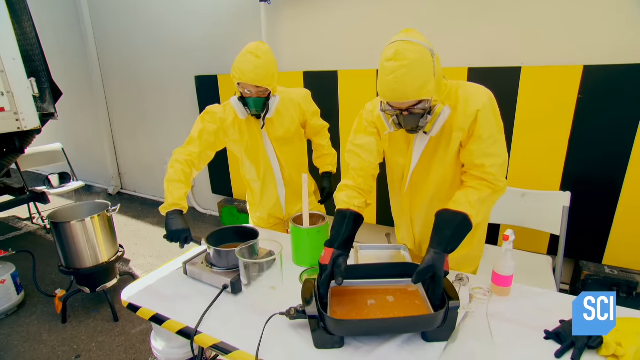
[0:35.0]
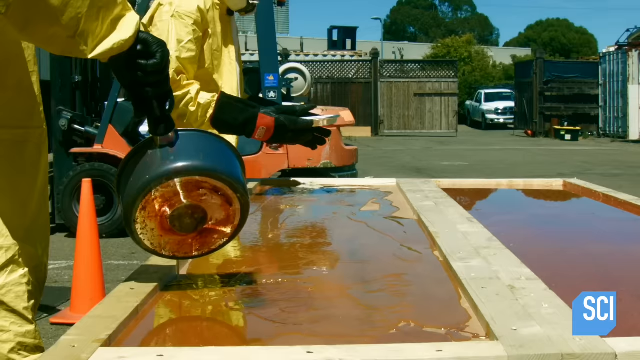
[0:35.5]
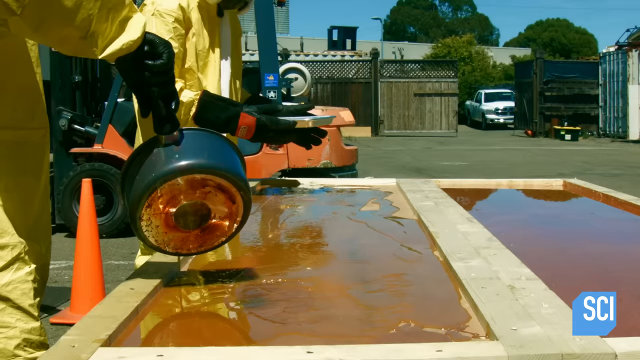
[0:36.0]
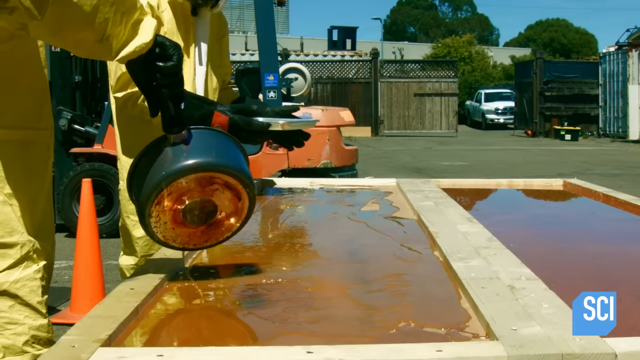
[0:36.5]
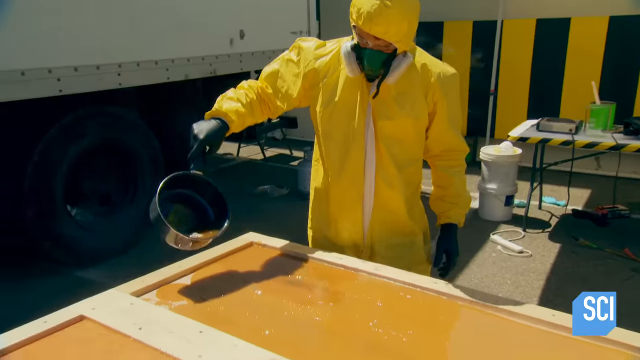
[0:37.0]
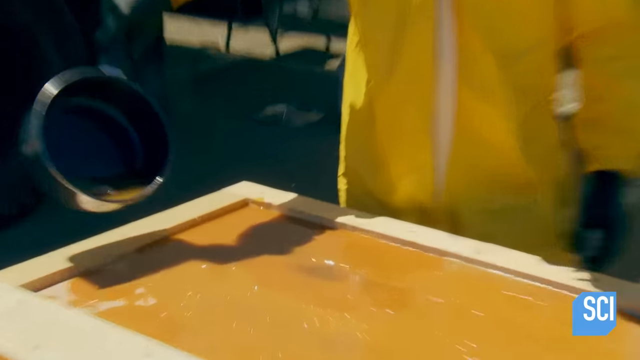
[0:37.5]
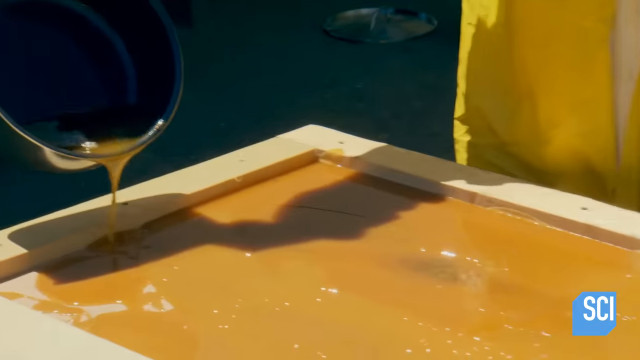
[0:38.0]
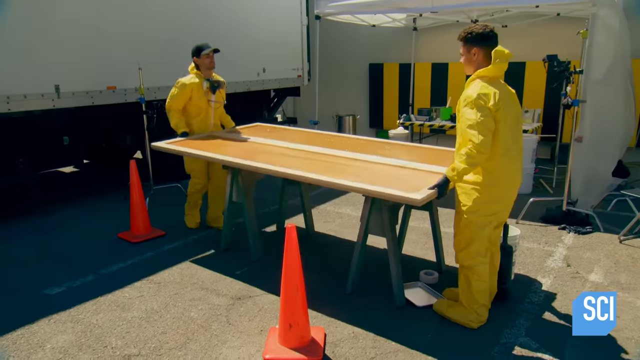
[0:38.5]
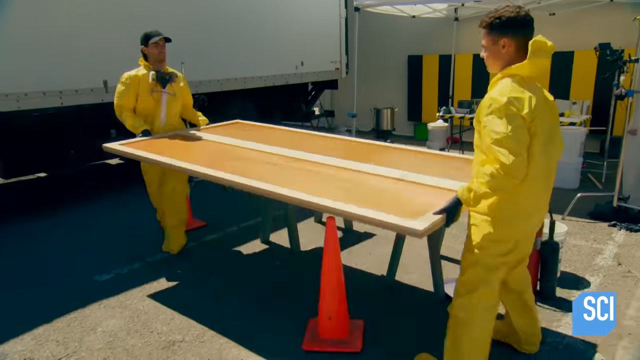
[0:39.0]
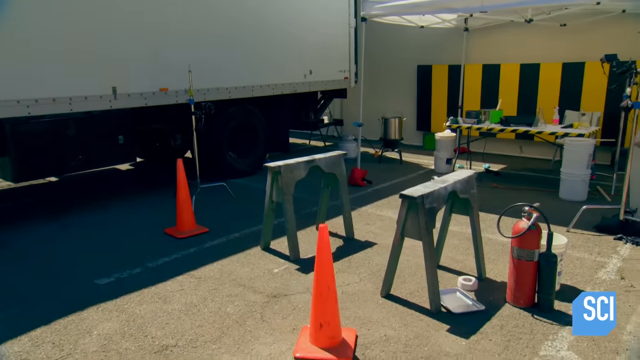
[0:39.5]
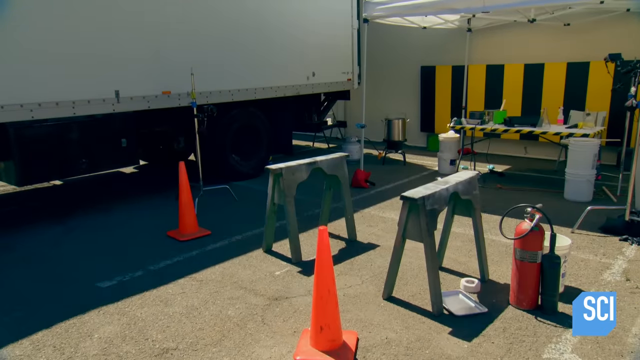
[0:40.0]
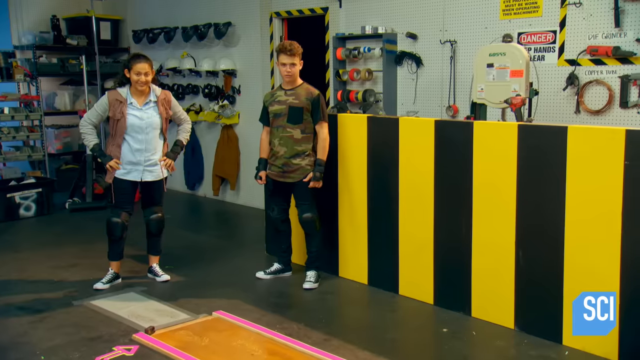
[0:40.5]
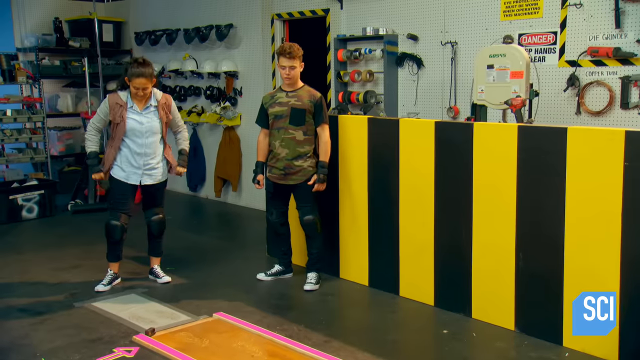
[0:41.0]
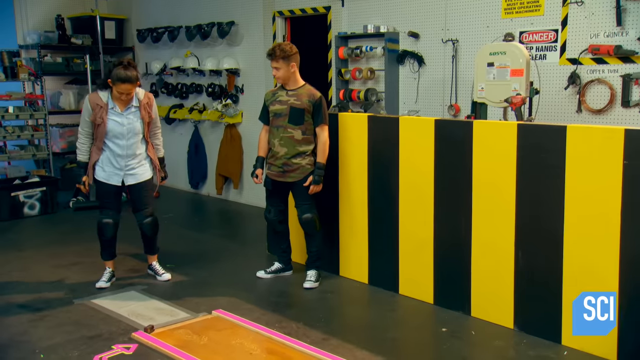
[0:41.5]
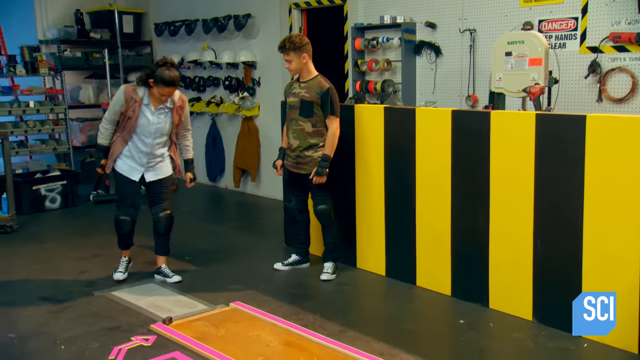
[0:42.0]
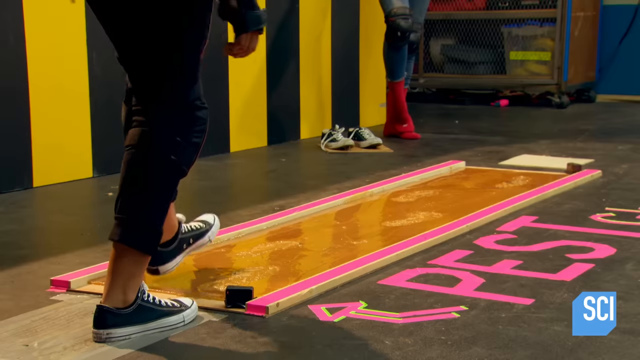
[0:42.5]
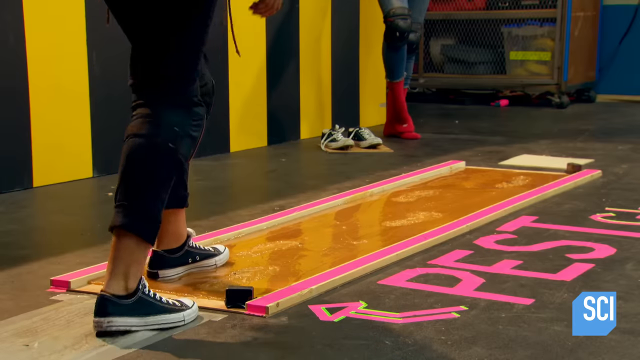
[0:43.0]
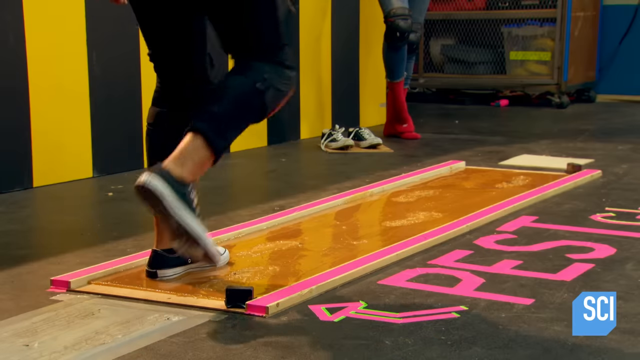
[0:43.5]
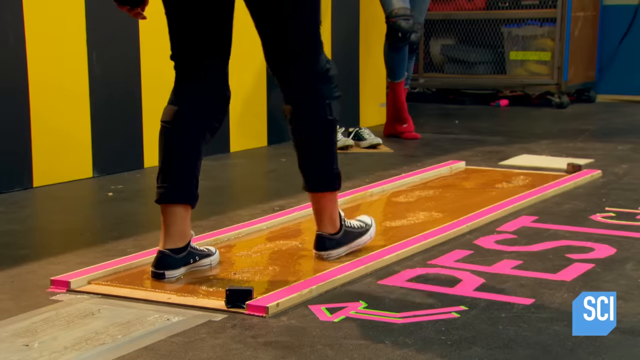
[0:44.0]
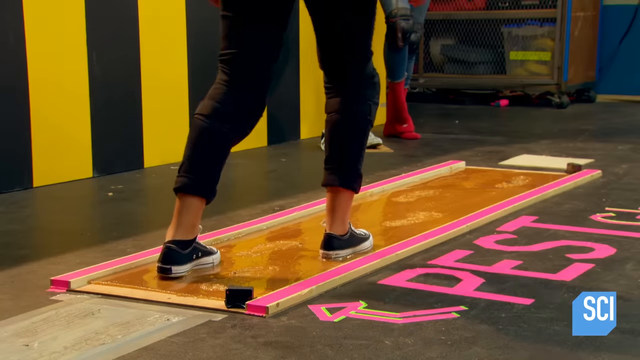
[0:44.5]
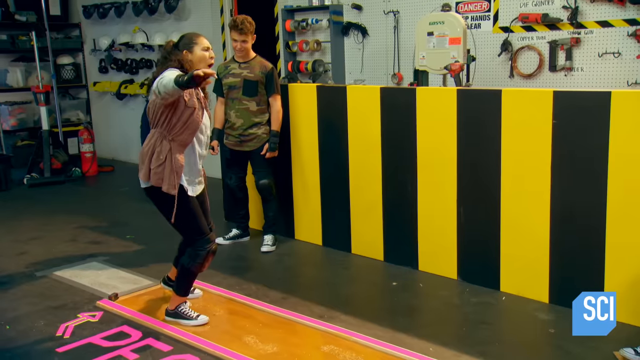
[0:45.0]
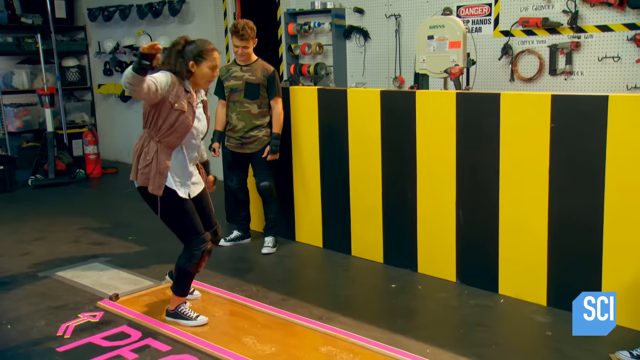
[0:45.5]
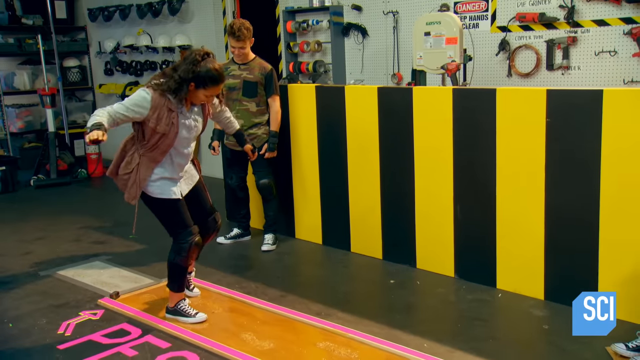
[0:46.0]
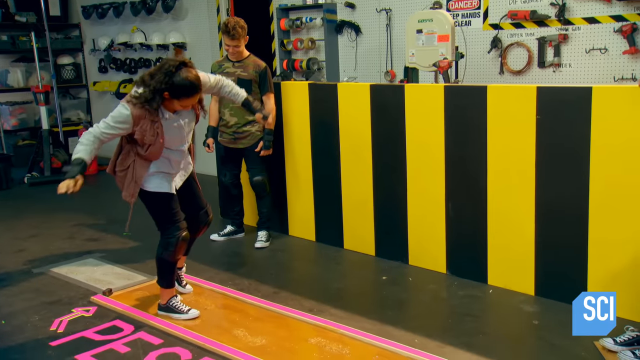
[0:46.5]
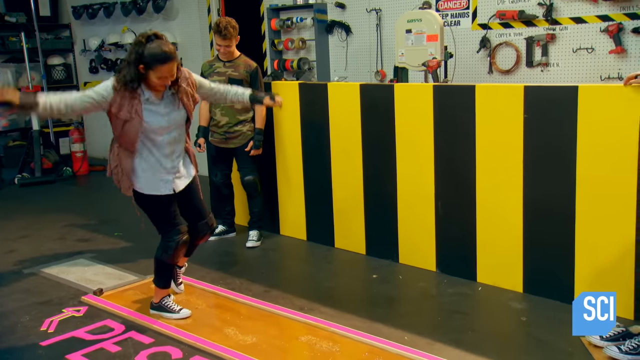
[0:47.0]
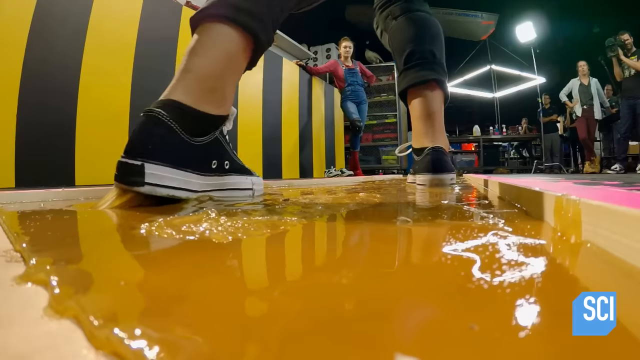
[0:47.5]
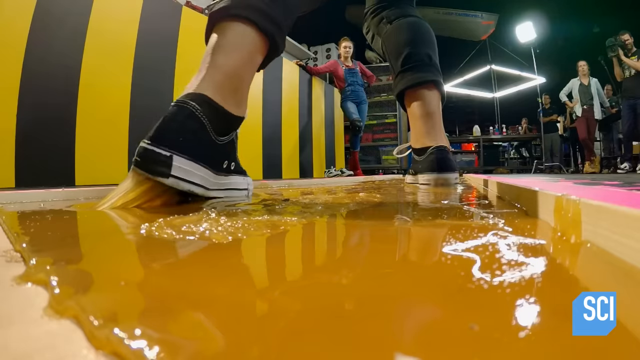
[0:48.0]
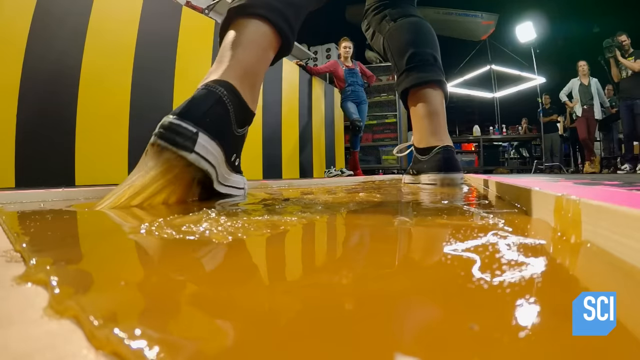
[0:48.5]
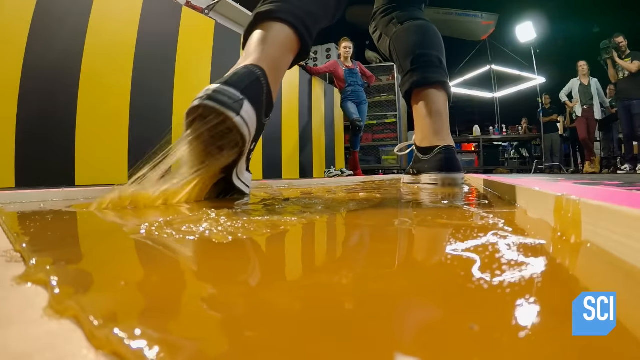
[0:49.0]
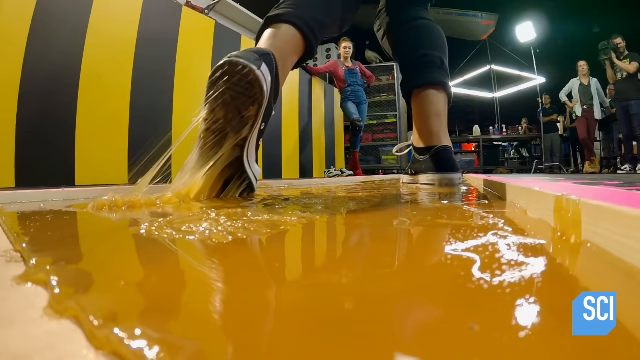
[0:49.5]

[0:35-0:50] There is a large casserole-type heater with a metal tray inside, where the young man is heating up the glue for the experiment. The camera pulls out, showing them fully covered with face masks and large rubber gloves to protect them from the glue. The man on the left stirs the glue in the pot in front of him as the young man on the right lifts out the tray, which now holds melted glue. The video cuts to an outdoor space where they have taken large boards and are filling the interior with the heated glue. They each take one end of a board and lift it. The board is moved indoors, back in the workshop, where the young lady from the left-hand side with the sleeveless vest is wearing black sneakers. The adult helping them stands to her left. She takes a first step onto the glue and lifts her foot, showing her shoe stuck to the glue. She then tries to walk across, and with each step the glue attempts to attach to her shoe. The teenage boy in the black and camouflage shirt stands behind her to the left, watching, while a shot shows a cameraman and another woman in front of her.